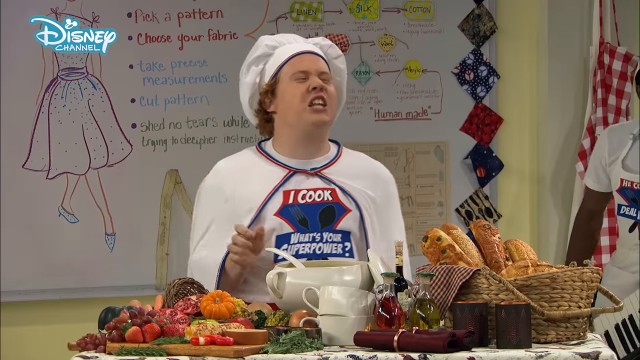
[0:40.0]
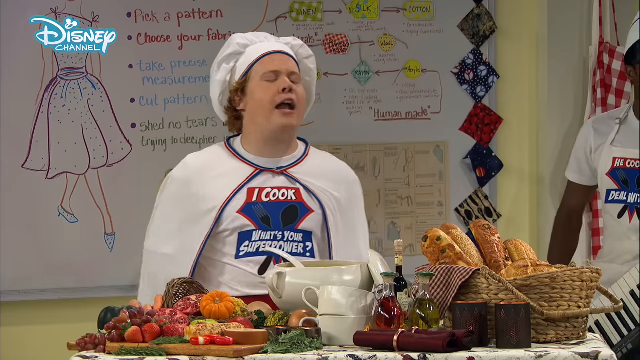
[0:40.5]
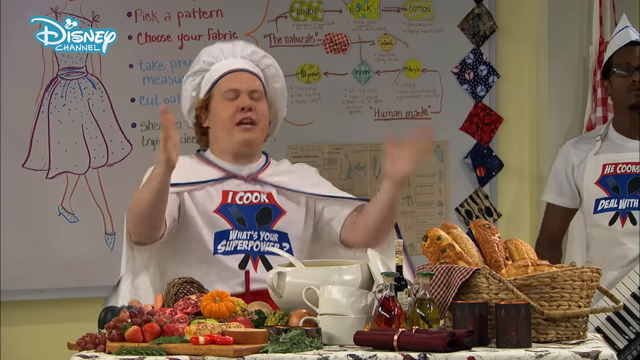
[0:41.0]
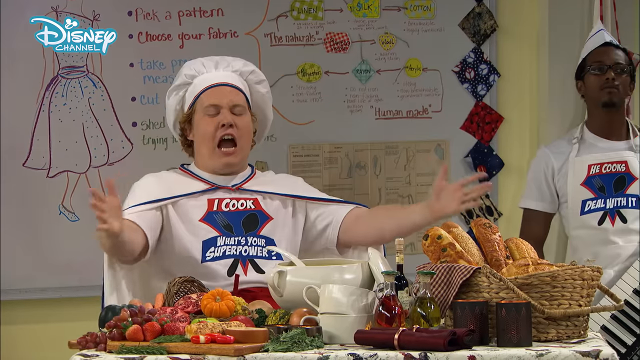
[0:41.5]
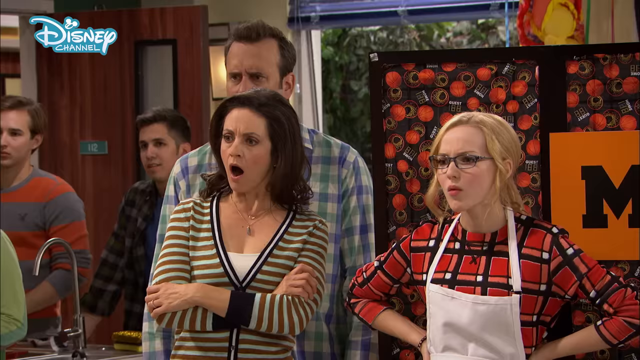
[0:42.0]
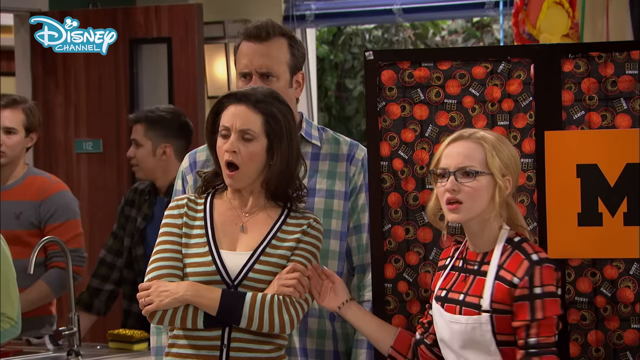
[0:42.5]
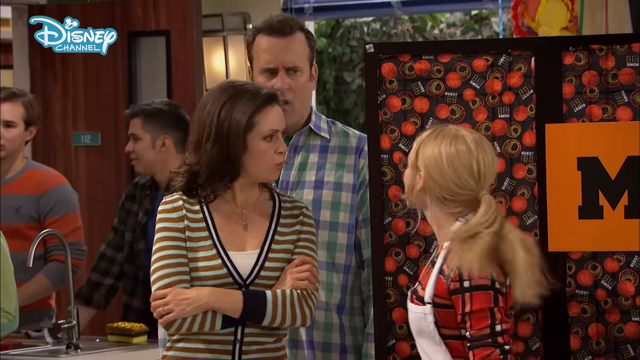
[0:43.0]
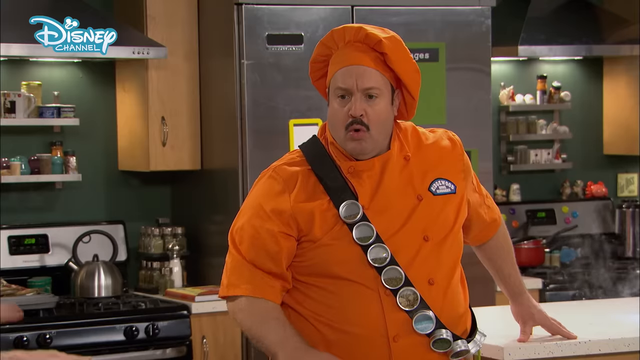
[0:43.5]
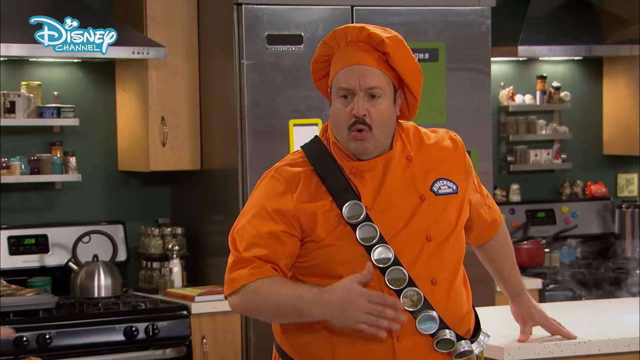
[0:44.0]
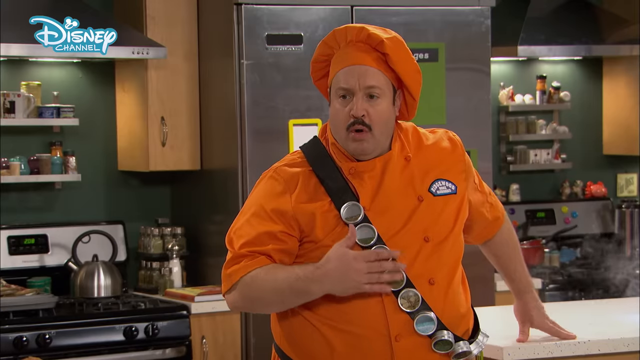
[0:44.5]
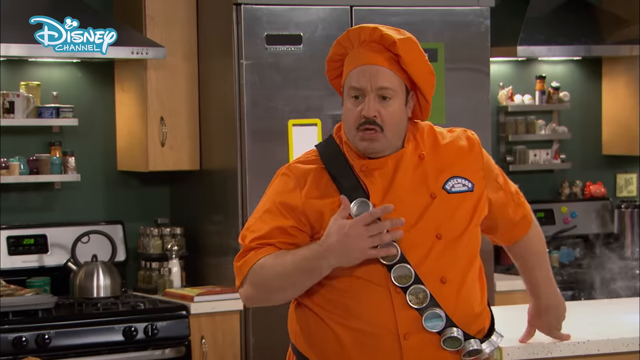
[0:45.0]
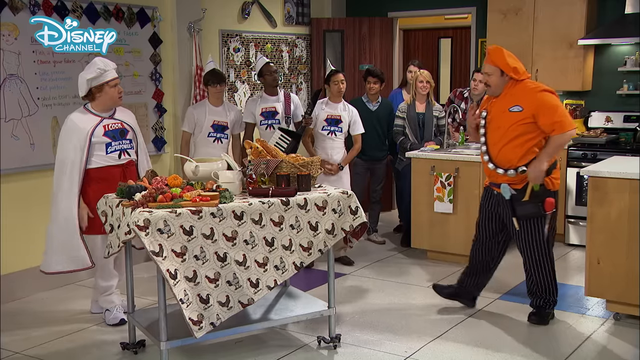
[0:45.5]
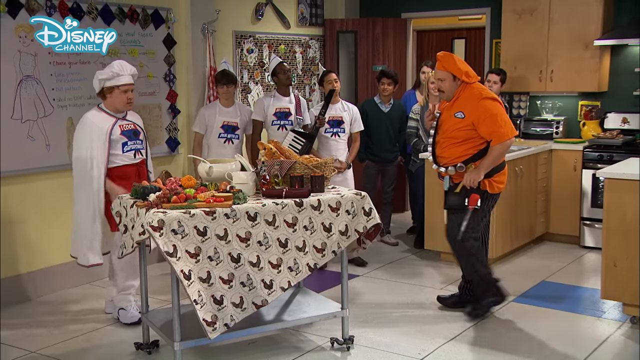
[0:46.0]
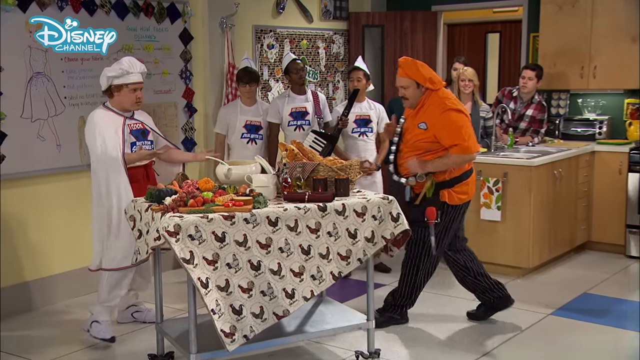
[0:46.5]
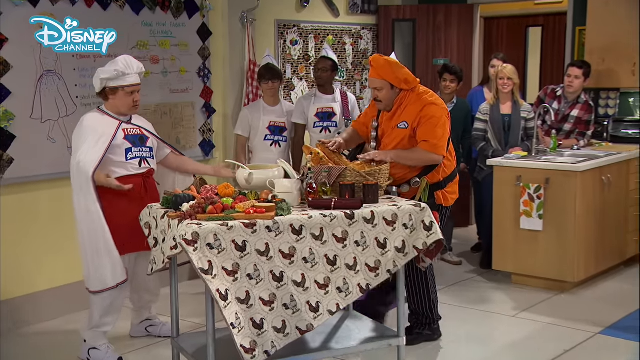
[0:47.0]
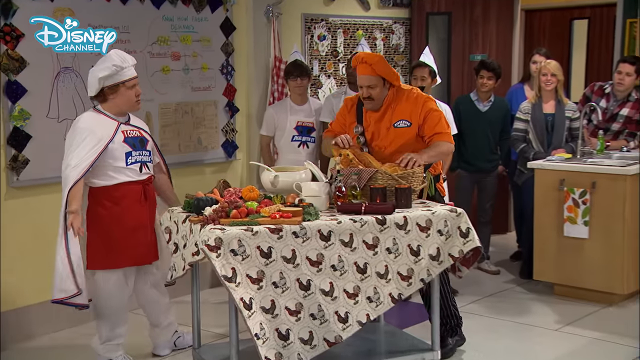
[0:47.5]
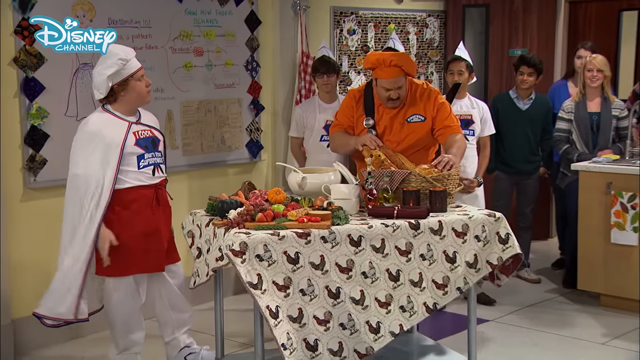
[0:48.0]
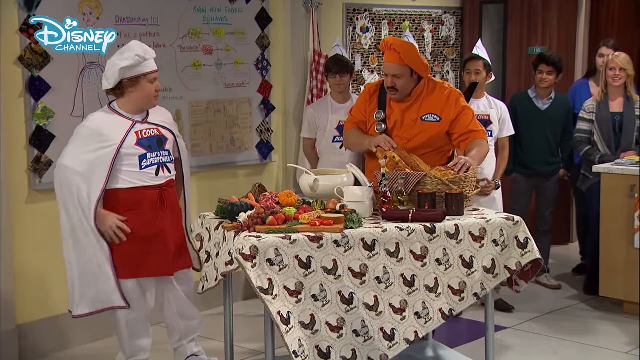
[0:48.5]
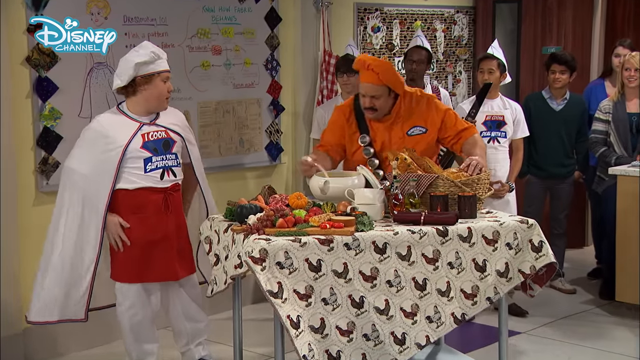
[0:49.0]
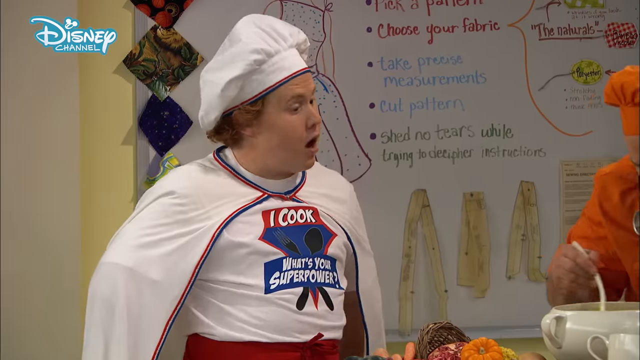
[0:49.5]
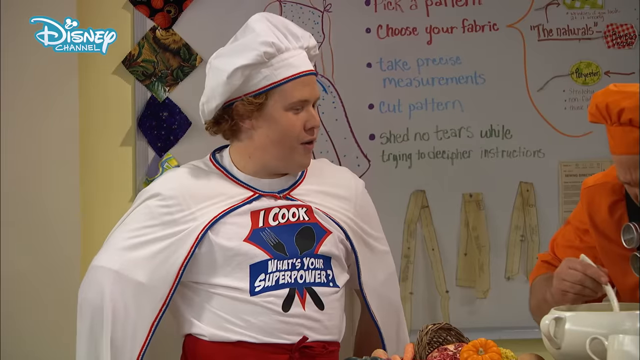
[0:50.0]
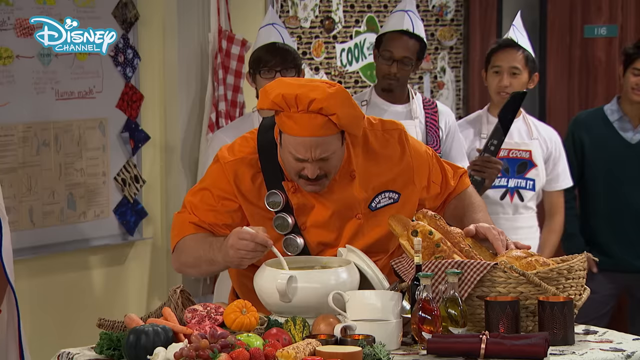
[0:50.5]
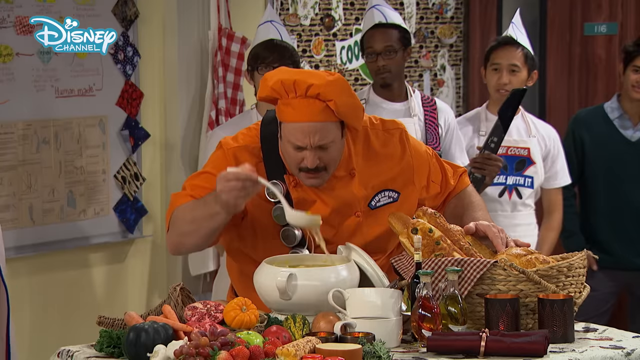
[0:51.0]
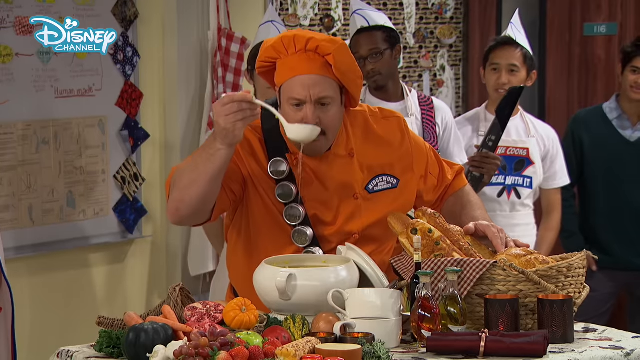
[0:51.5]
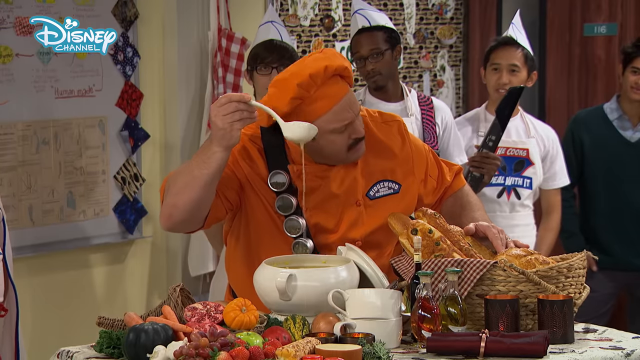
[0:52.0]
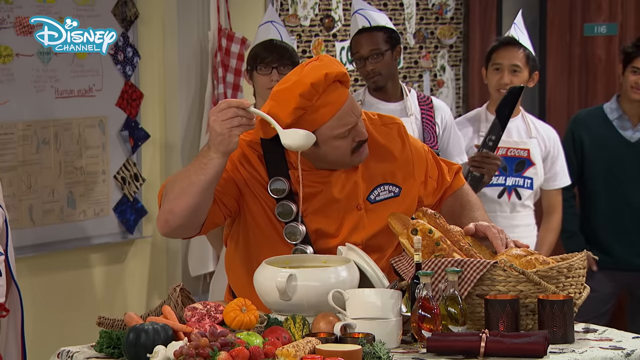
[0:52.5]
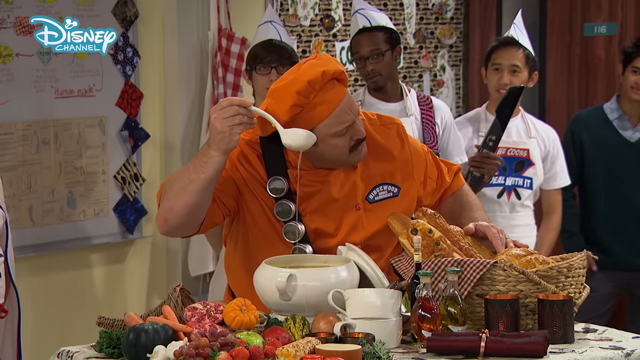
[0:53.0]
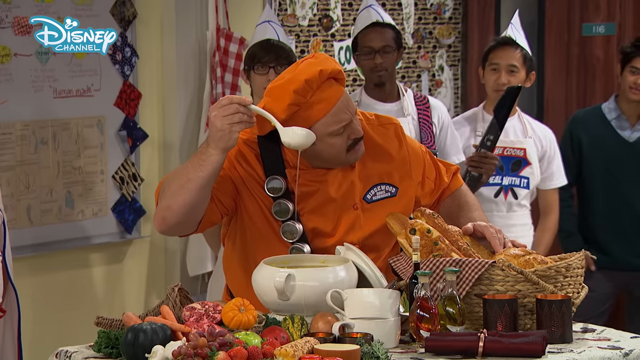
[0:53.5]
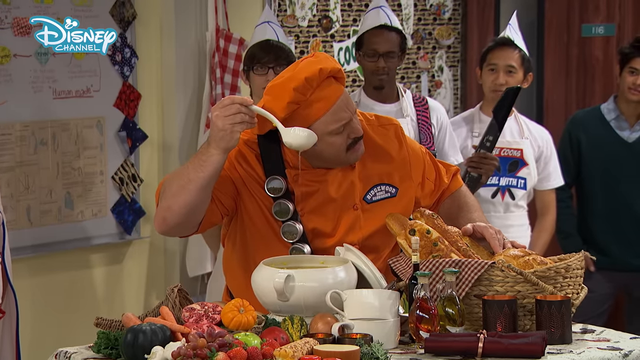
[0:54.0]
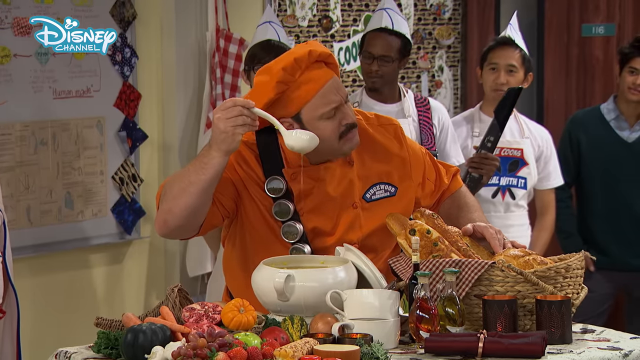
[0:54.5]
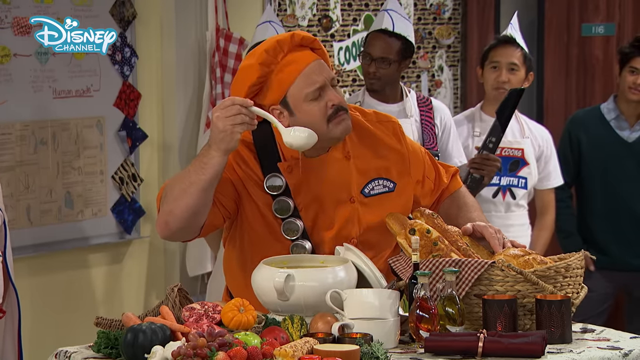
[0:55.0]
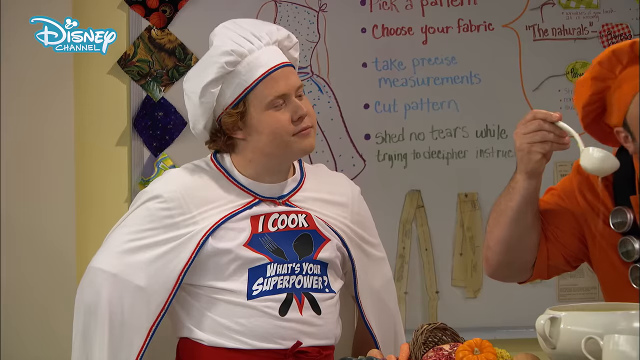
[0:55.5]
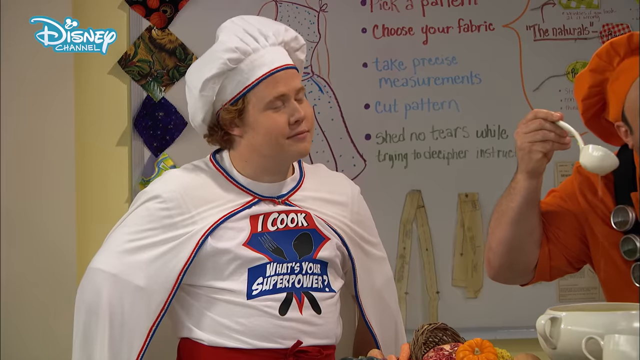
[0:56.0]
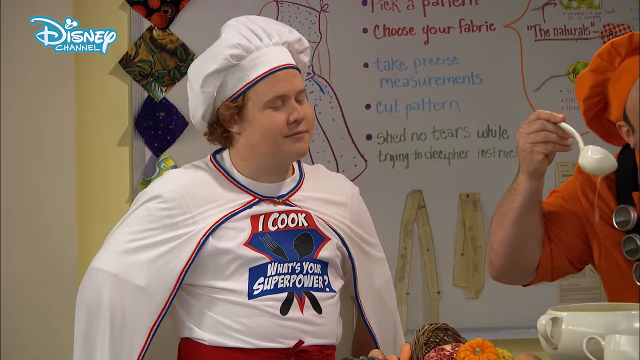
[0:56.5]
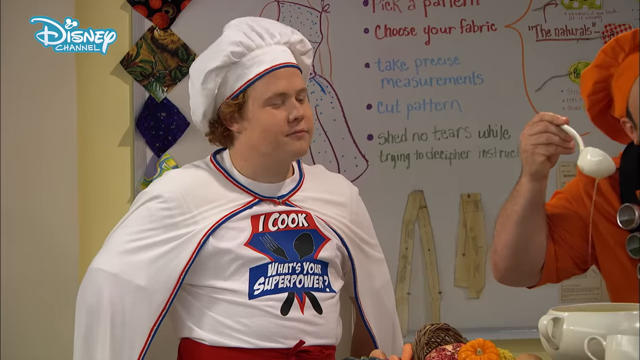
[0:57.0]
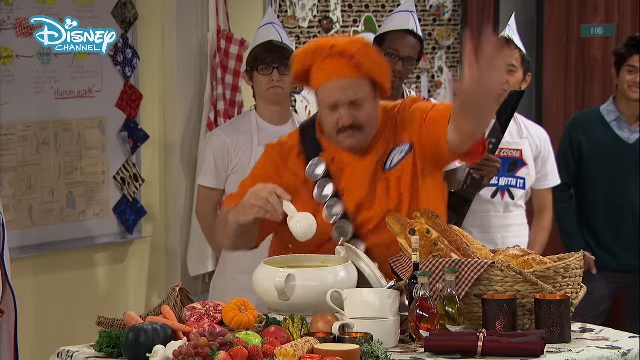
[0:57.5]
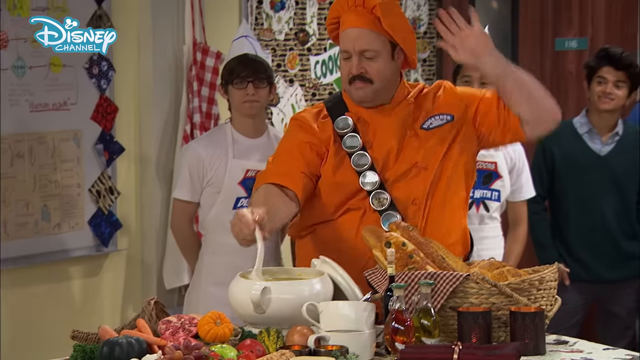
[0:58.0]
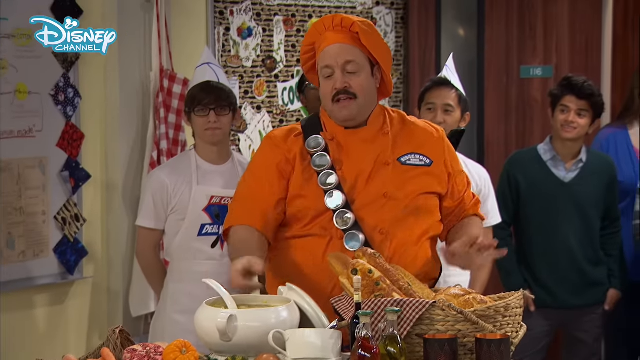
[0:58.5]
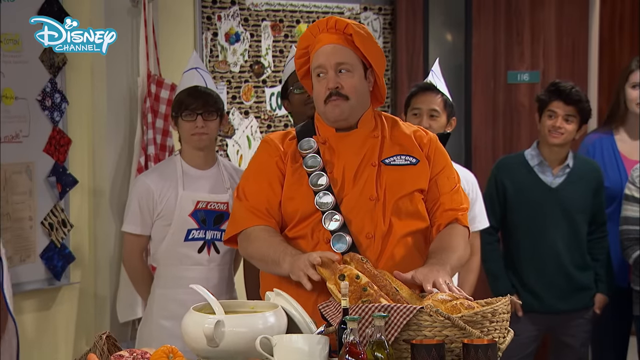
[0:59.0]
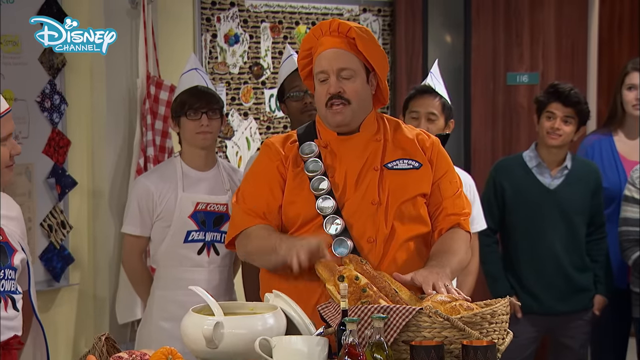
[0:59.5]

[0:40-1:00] A young man in a chef's outfit stands by a table with some food in a bowl on it. The chef in the orange outfit picks up the ladle and pours its contents back into the bowl. The young man's shirt says "I cook, what's your superpower?" Behind him is some kind of billboard with writing on it, a drawing of a woman in a pink dress with shoes, and some squares of material in different colors. On the table there is a basket with what look like bread loaves, and what looks like a little pumpkin on the left side of the table. A red and white chef's towel or apron hangs on a hook on the right side of the table, where the young man is standing.